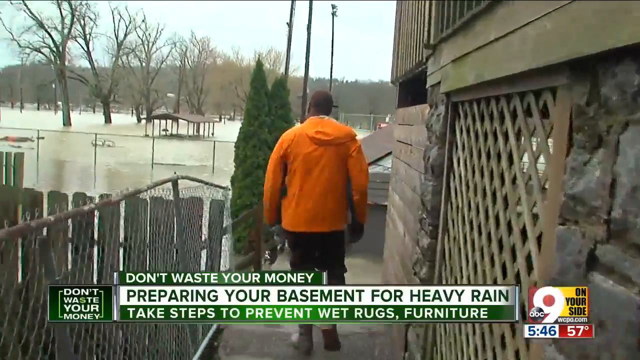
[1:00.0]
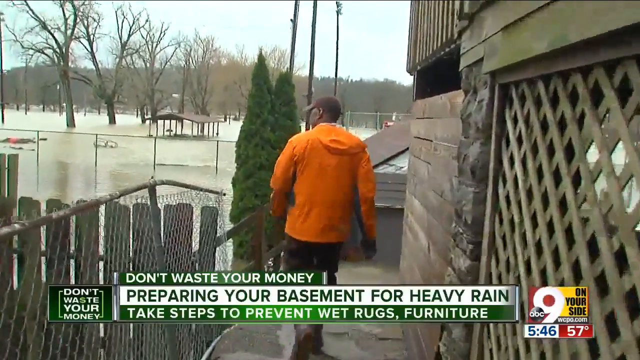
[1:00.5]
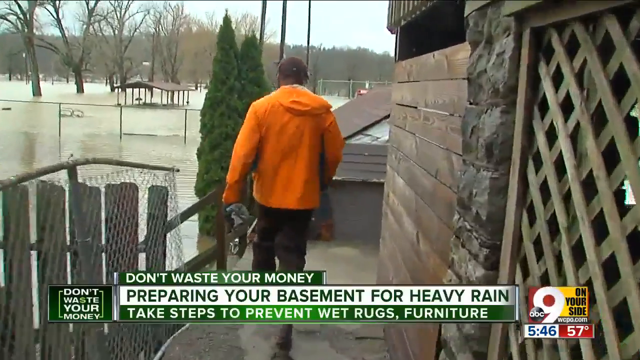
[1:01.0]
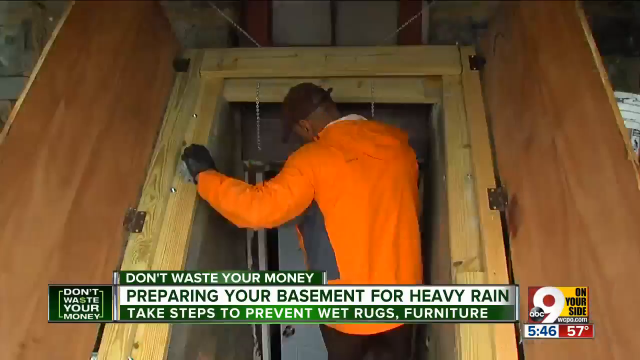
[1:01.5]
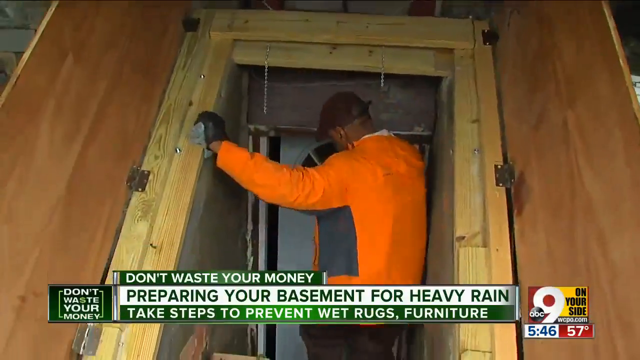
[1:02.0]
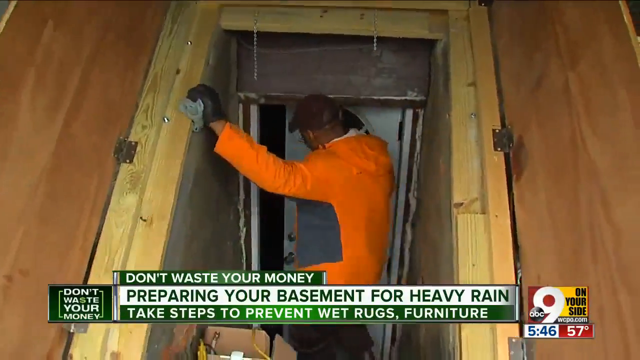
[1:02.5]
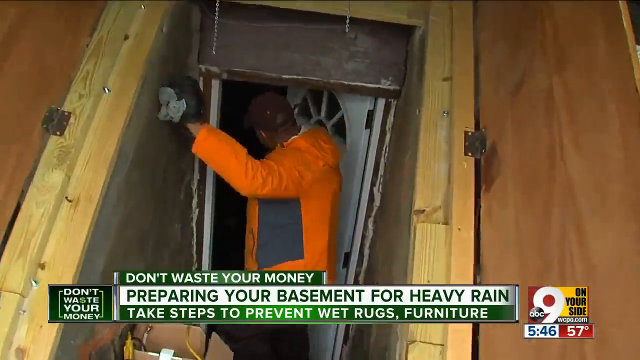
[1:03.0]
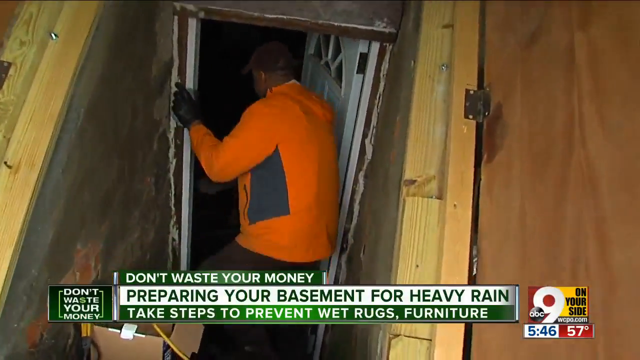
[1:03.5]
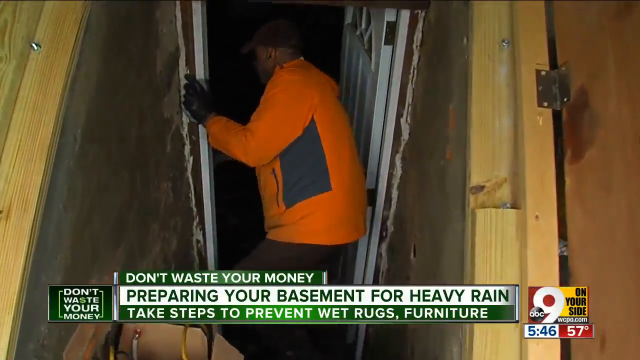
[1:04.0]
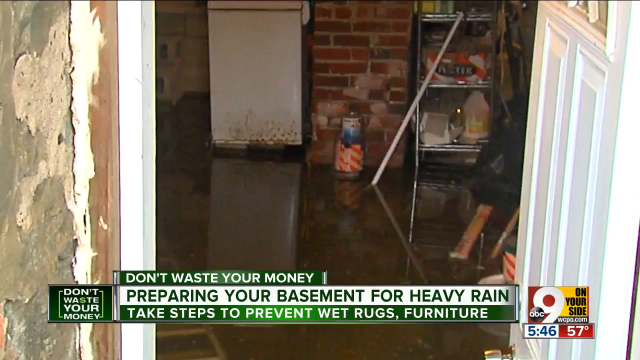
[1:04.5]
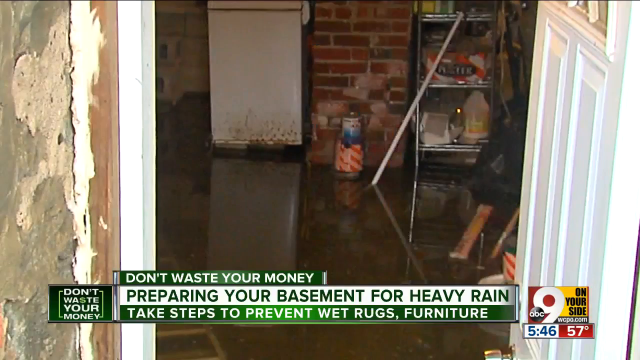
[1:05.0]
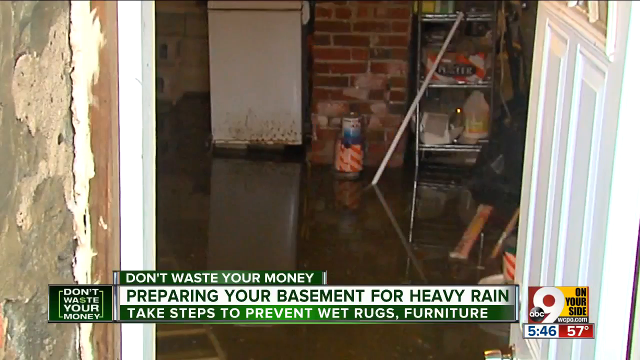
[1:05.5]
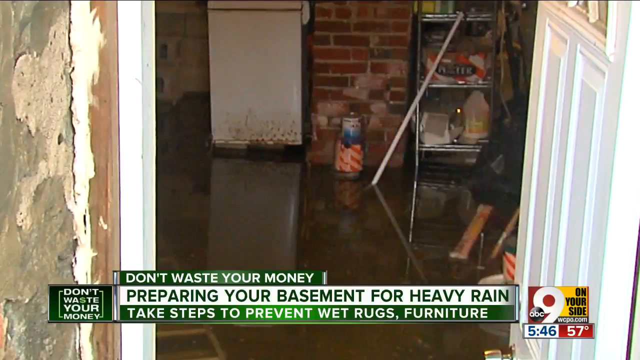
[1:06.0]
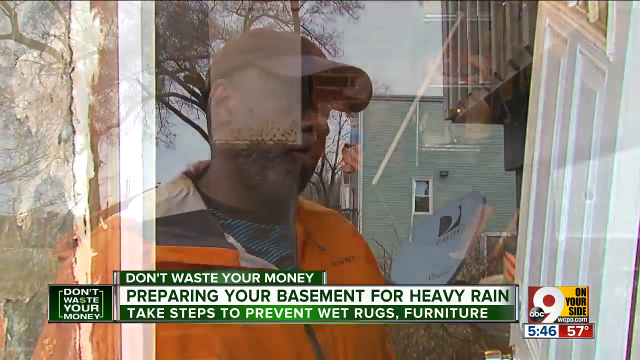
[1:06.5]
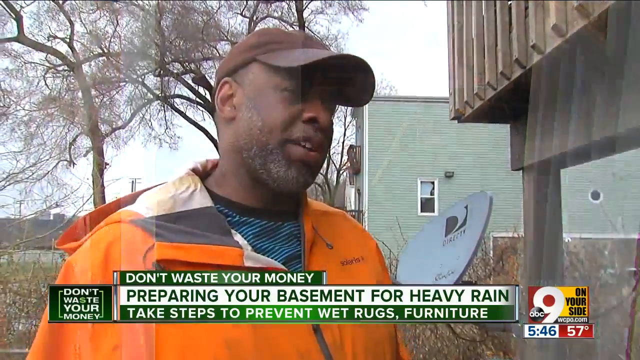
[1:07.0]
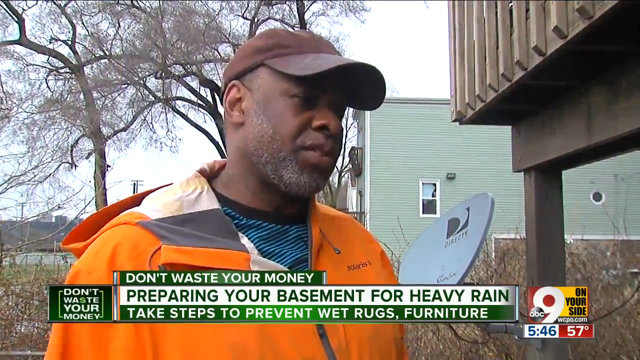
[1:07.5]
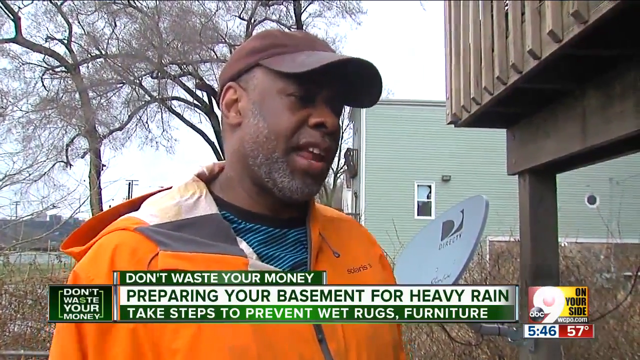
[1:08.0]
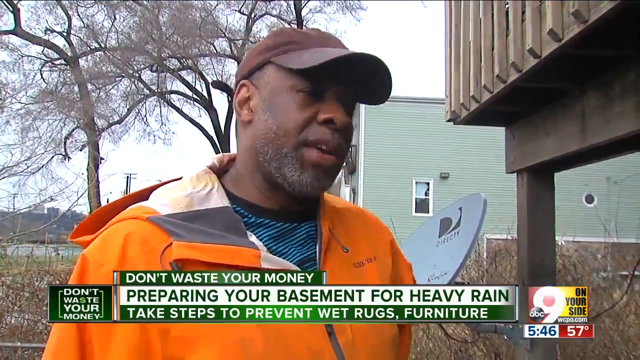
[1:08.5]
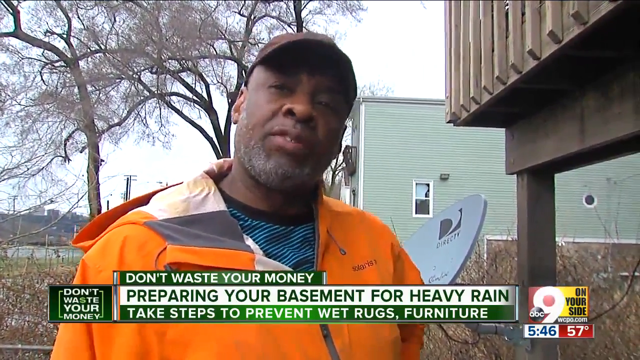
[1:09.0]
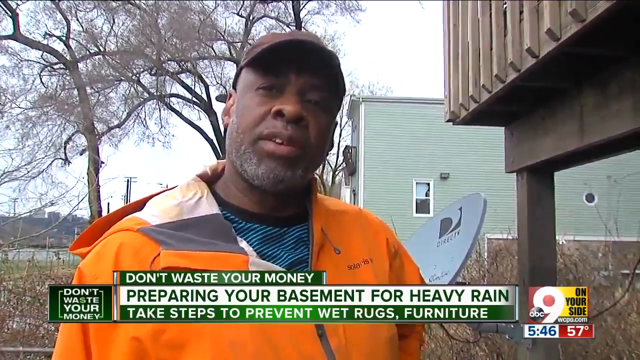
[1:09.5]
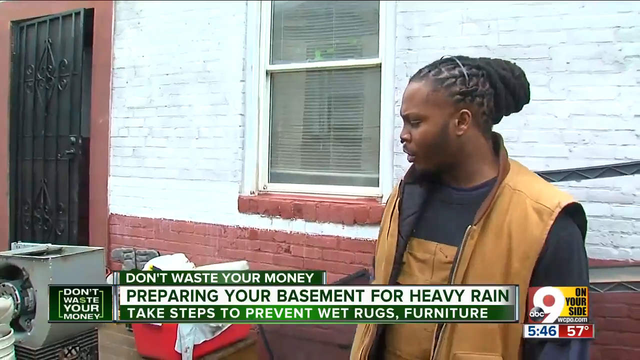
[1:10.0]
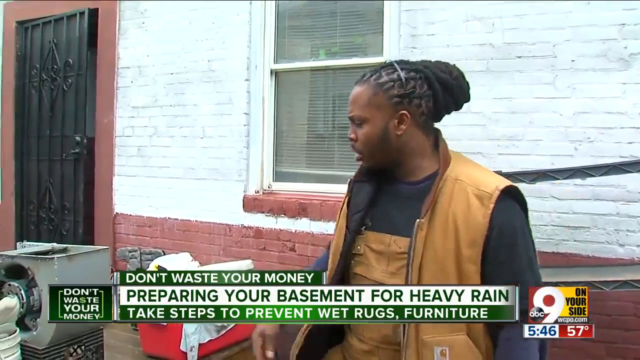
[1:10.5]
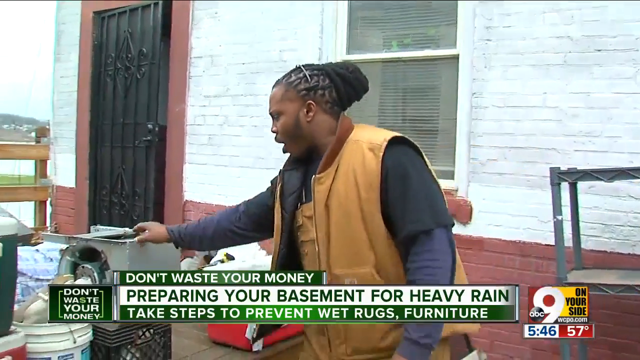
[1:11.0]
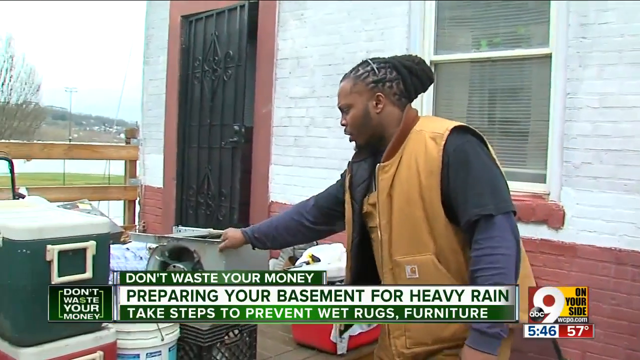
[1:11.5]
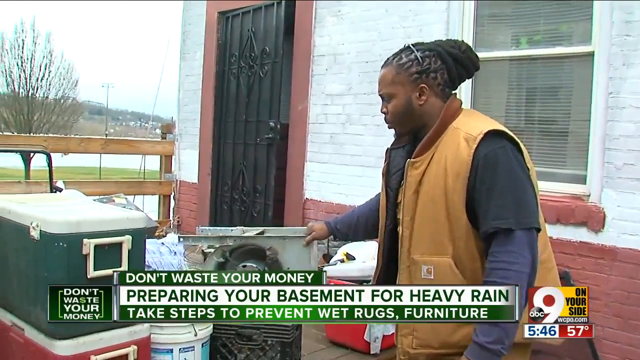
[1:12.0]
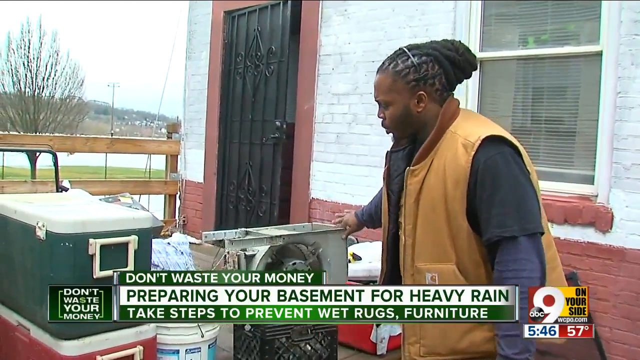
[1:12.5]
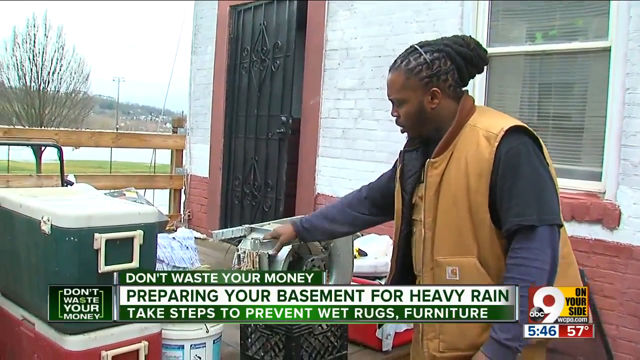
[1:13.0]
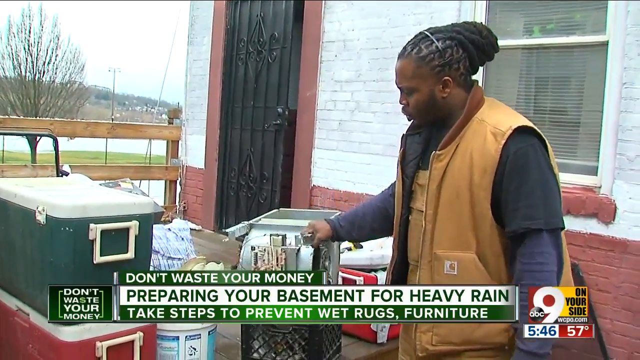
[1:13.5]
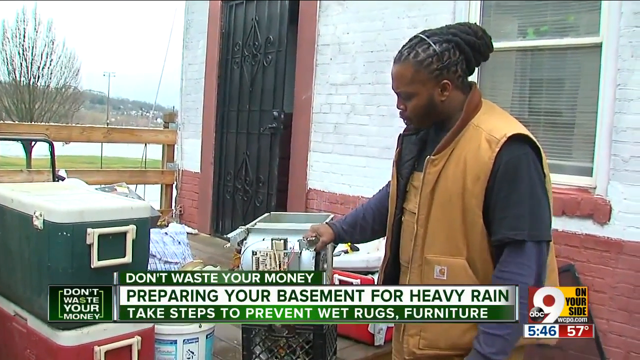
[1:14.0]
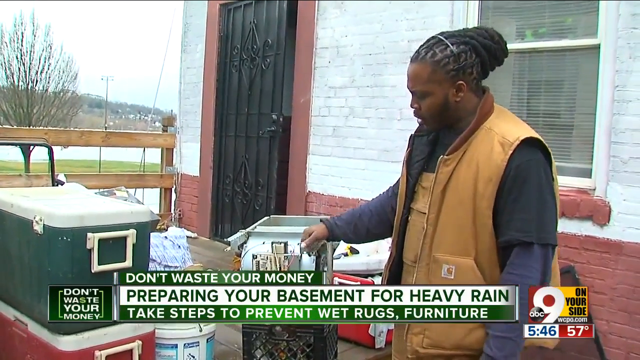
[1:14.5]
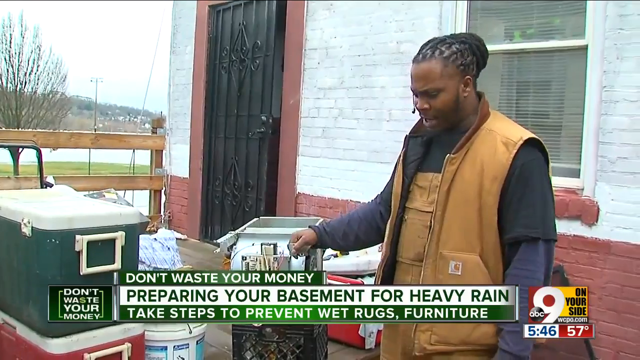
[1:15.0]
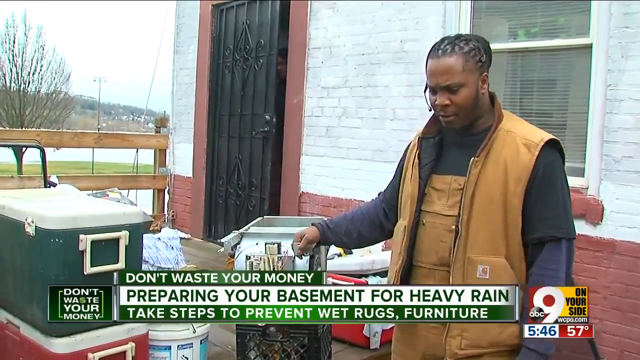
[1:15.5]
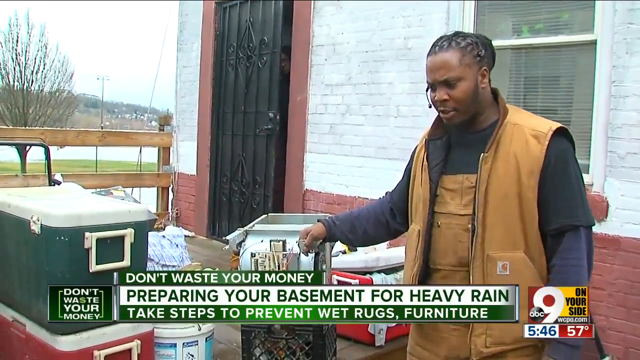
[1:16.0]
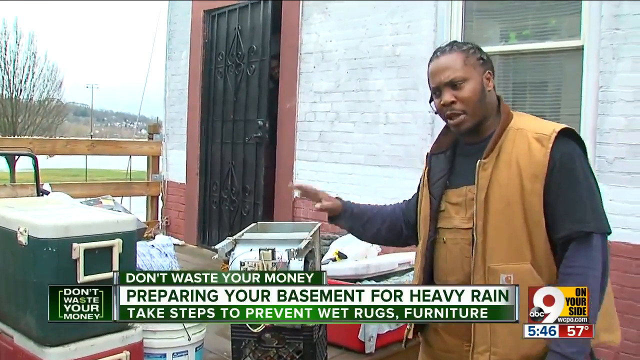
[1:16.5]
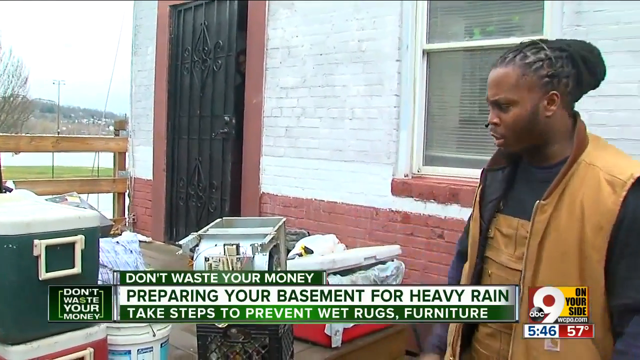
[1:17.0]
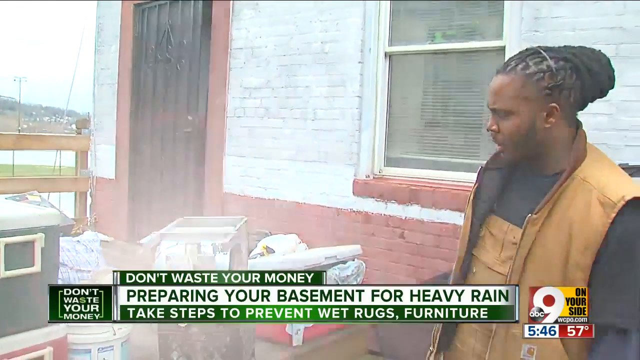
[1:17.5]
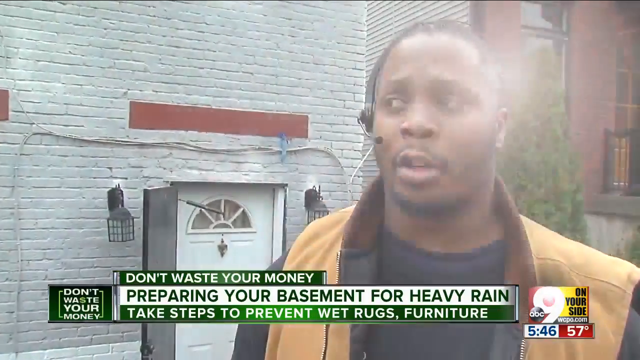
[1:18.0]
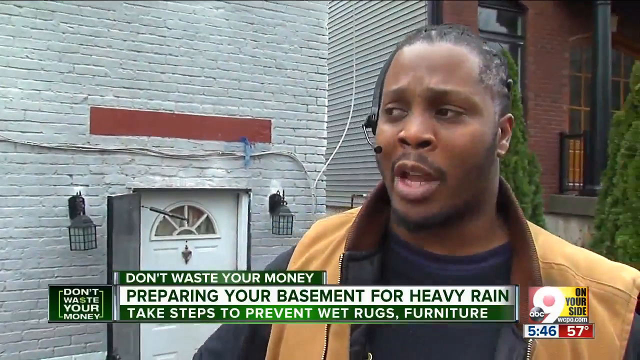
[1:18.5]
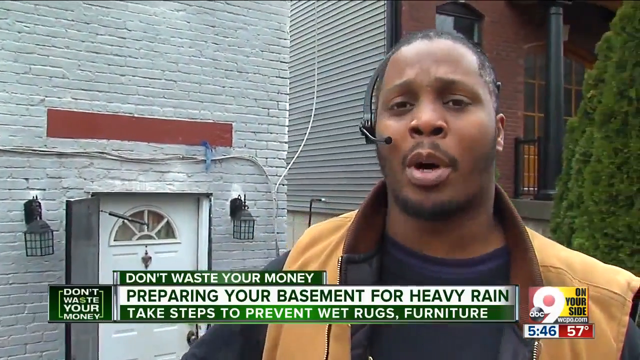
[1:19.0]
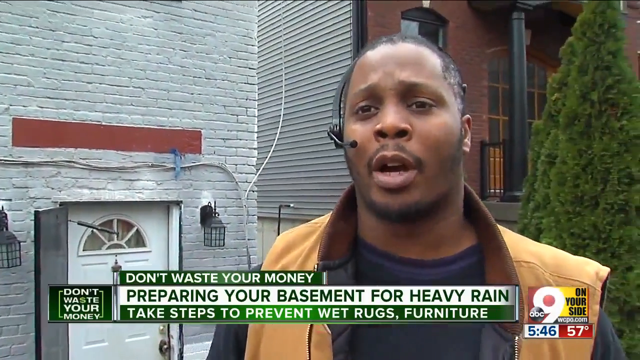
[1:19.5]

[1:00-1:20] A man in an orange jacket goes down into his basement, which shows heavy flooding. In the continuing Don't Waste Your Money segment on Channel 9 News, the headline reads "preparing your basement for heavy rain, take steps to prevent wet rugs and furniture." Two men work side by side, apparently clearing out a basement, and look like they are using a water pump or something similar. They seem to know what they are doing, and they talk to the camera. They are at someone's house, probably their own. They walk along a pathway with spruce trees and a rickety fence next to them, and what looks like a park across the way. The house has latticing in the basement and stonework that looks like old-world masonry, and the rest of the house is constructed from wood.